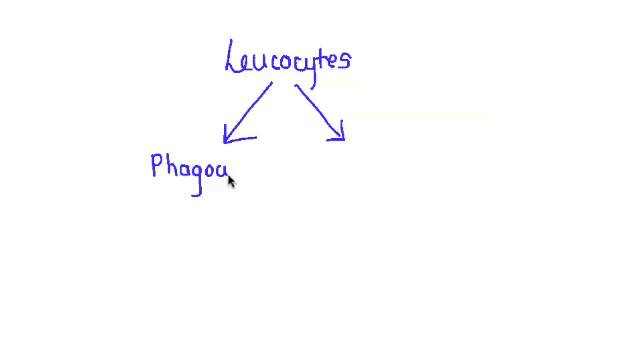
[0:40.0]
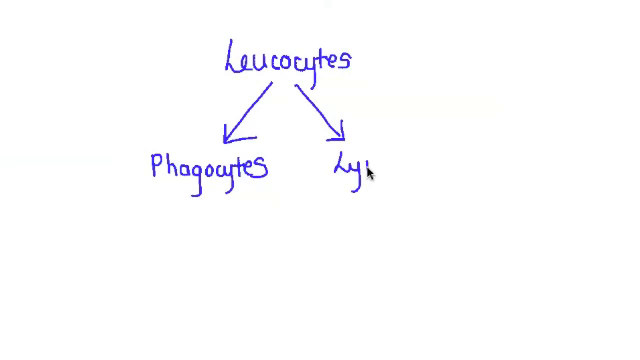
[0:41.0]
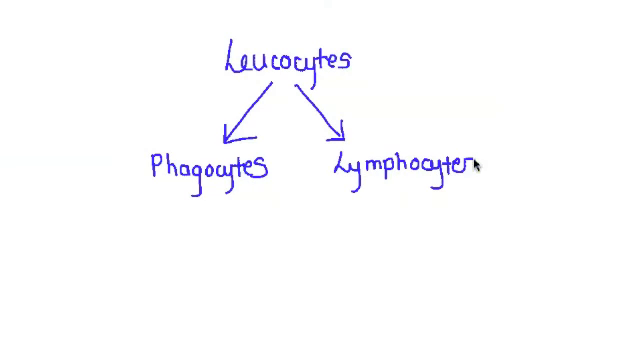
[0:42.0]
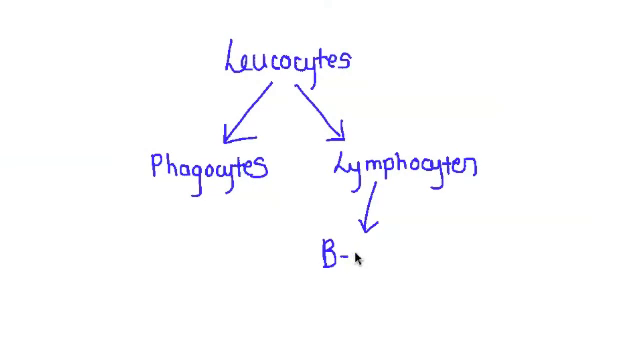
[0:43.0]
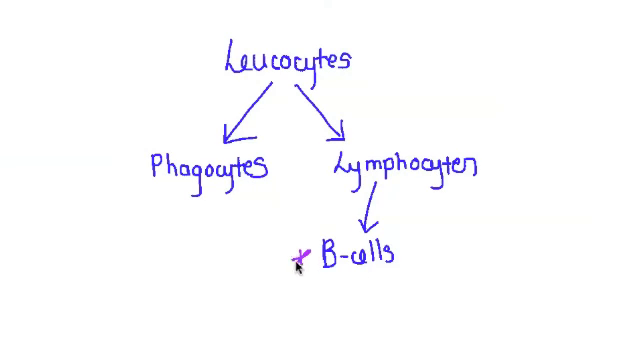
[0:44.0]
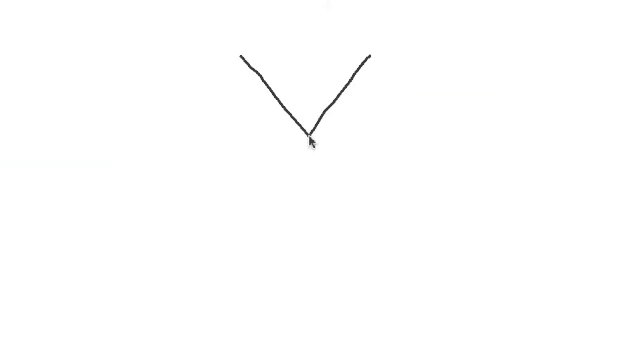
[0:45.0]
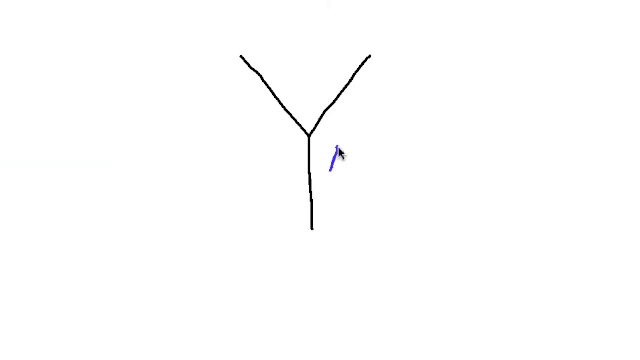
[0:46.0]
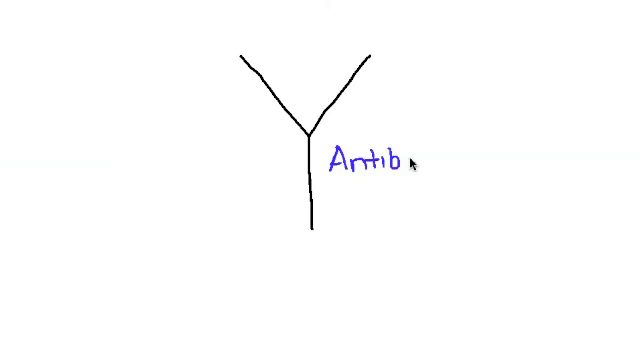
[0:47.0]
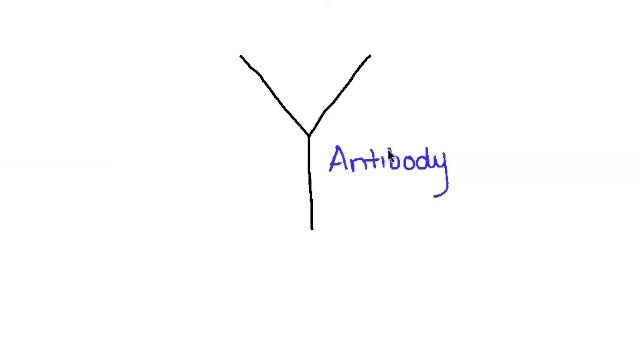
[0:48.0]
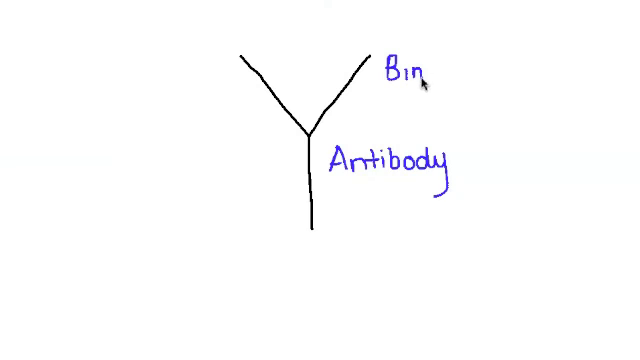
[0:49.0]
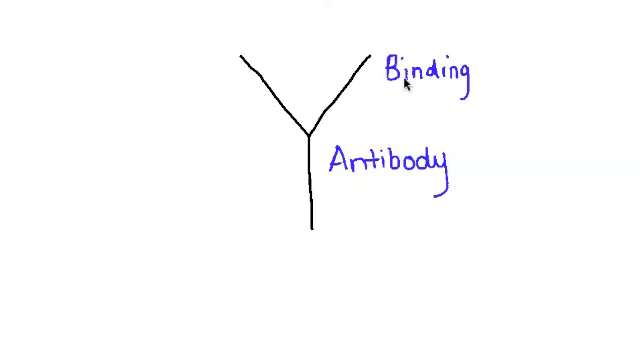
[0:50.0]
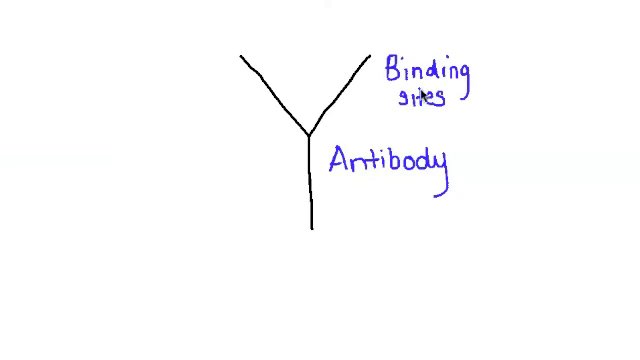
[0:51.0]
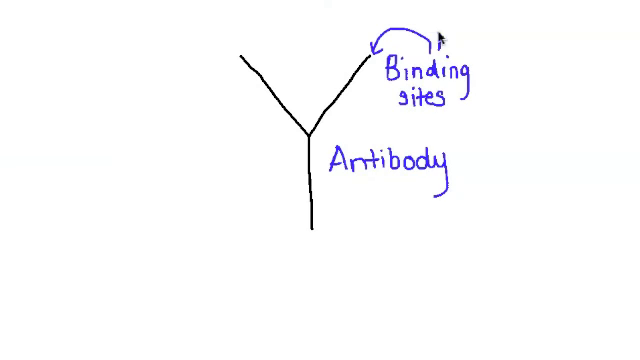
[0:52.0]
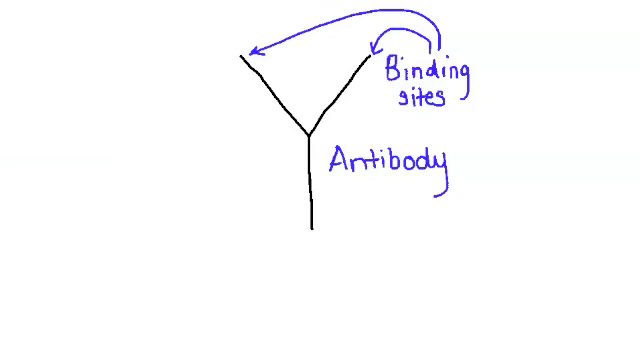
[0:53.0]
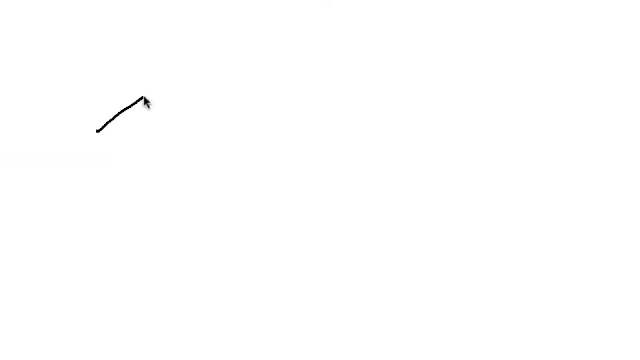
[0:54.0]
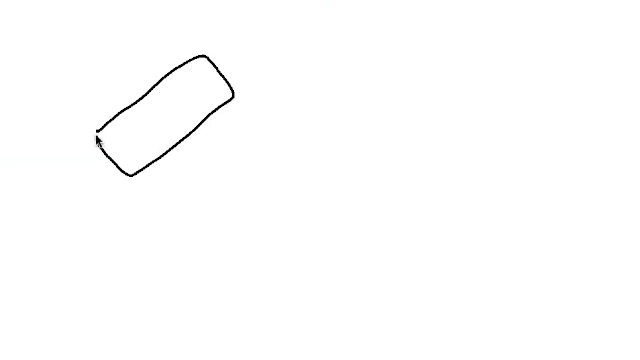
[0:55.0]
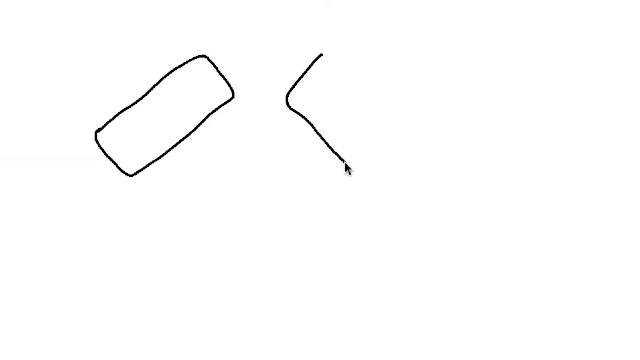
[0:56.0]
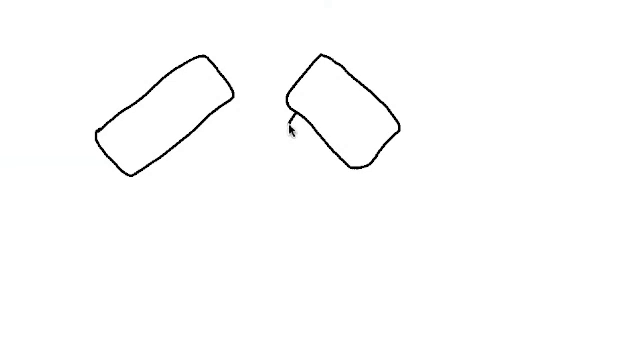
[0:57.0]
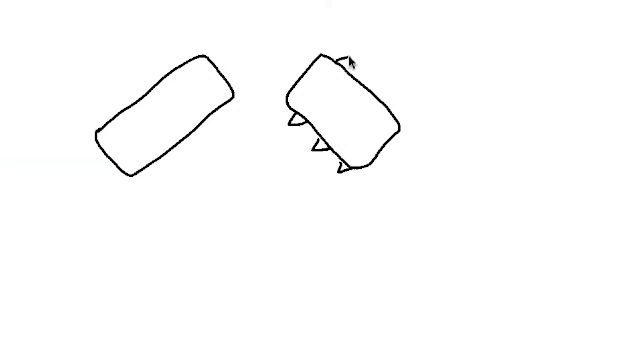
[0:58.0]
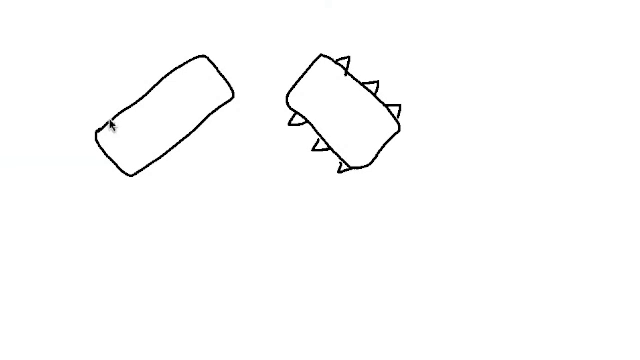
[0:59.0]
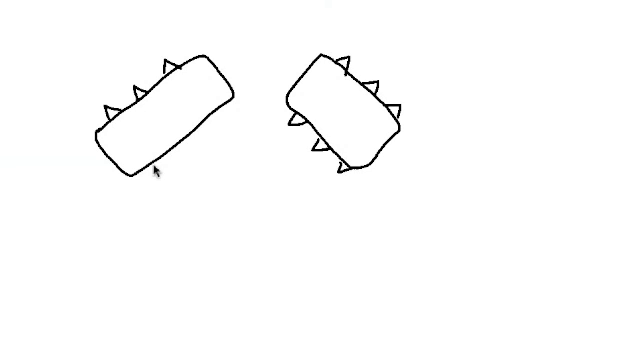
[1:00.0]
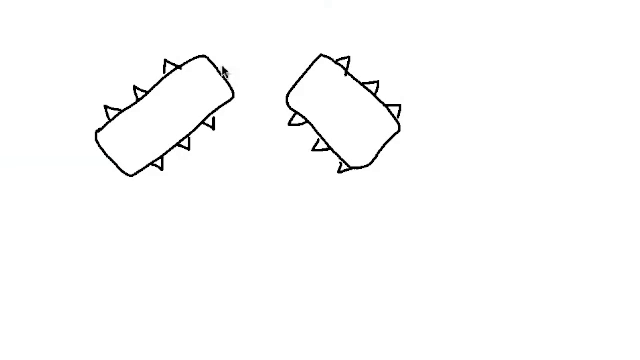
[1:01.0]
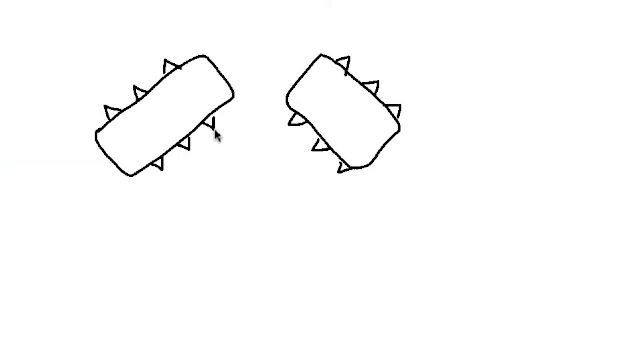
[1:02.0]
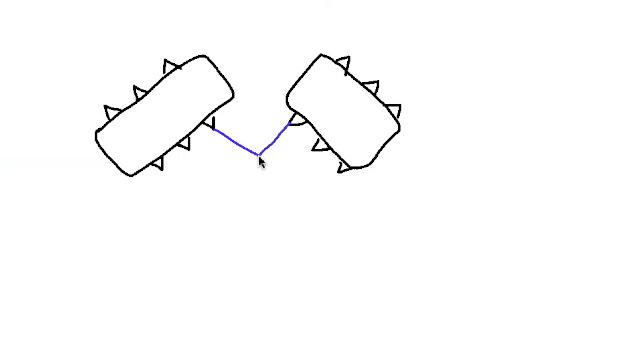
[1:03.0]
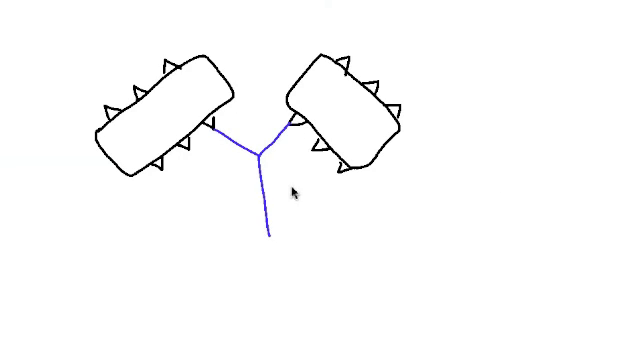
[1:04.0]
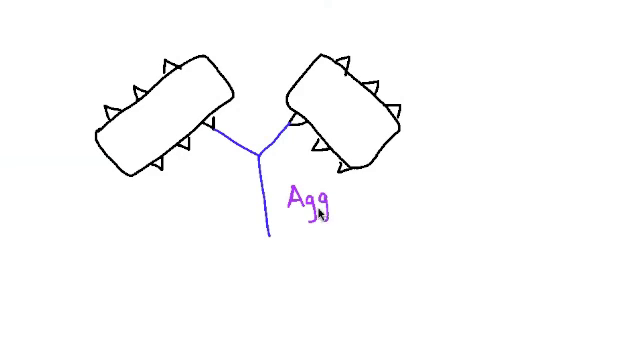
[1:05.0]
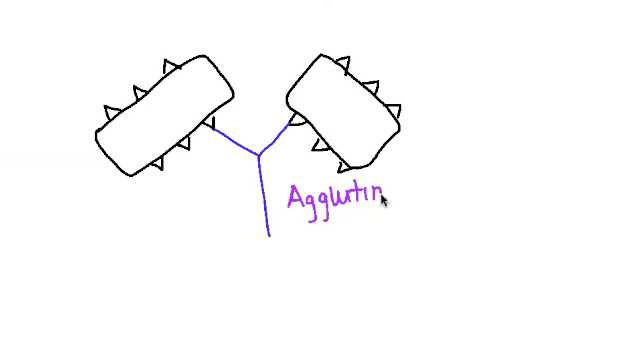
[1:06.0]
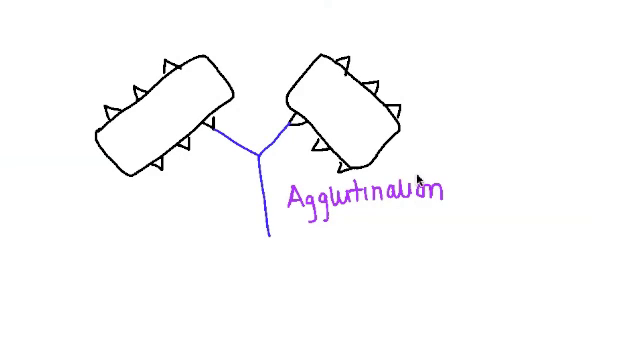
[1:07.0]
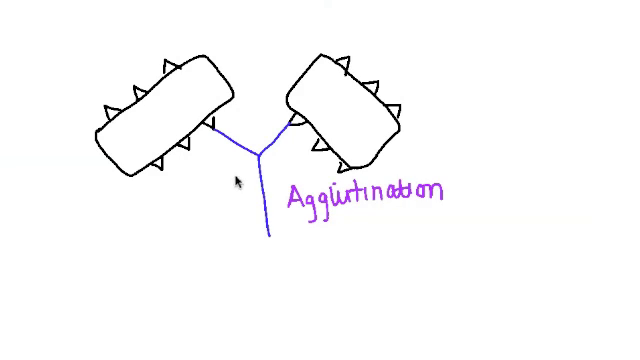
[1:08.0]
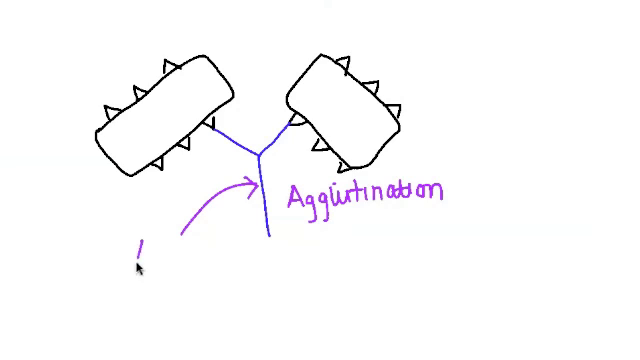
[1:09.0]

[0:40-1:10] "LEUCOCYTES" is written in blue at the very top middle of the screen, with two blue arrows drawn below it pointing diagonally, one to the left and one to the right. Below the left arrow is written "PHAGOYCYTS", and under the right arrow is written "LYMPHOZYTEN". Under that, there is an arrow with "BL" written. On the next screen there is a big black Y. On the right side at the very top, "binding sites" is written, with two arrows pointing to the tops of the two points of the Y. Below "binding sites", "antibody" is written in blue. The arrow then draws two kind of diagonal rectangles, with diamonds on either side of the rectangles, connected by a blue Y. On the right side, underneath the rectangle and the blue part of the Y, it says "ATTLUTINATION", and on the left side it says "ATTLUTINATION". Then "ANTIB" is written, and the writing stops.